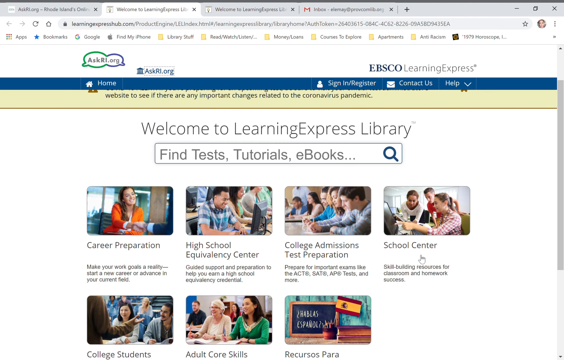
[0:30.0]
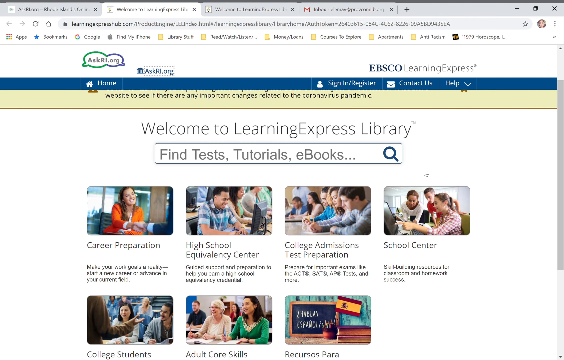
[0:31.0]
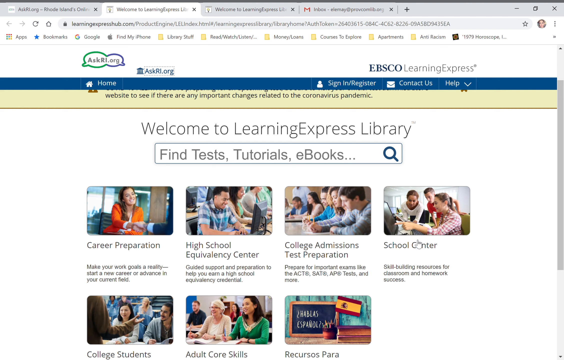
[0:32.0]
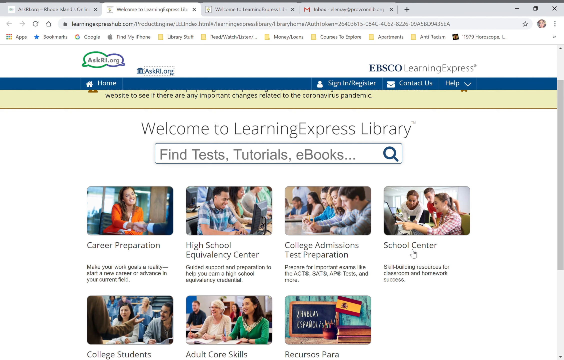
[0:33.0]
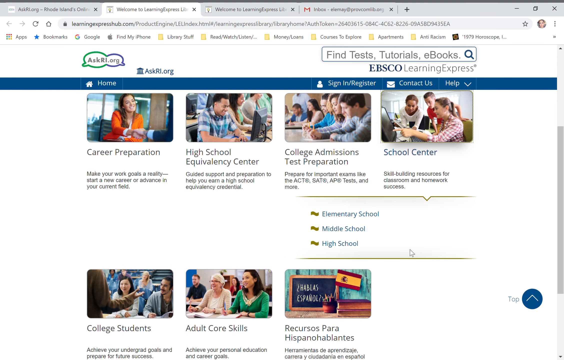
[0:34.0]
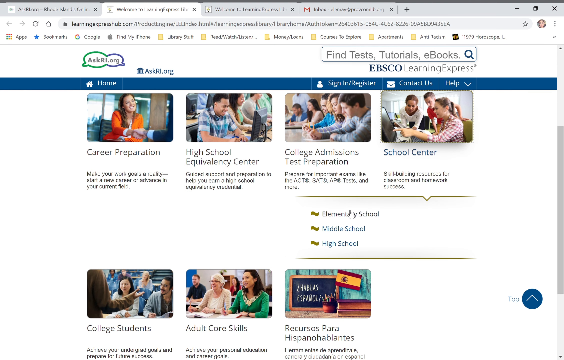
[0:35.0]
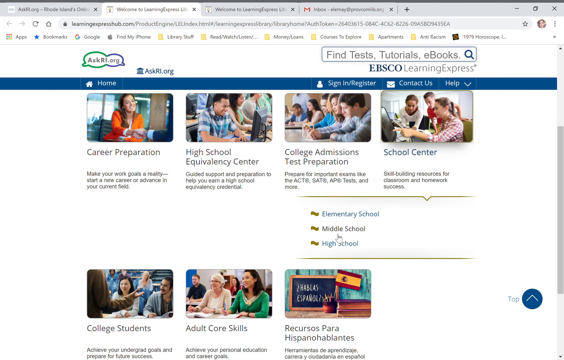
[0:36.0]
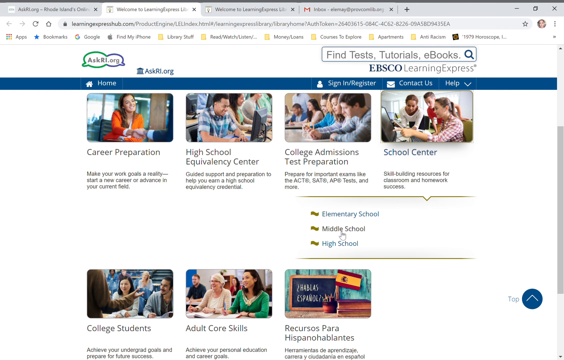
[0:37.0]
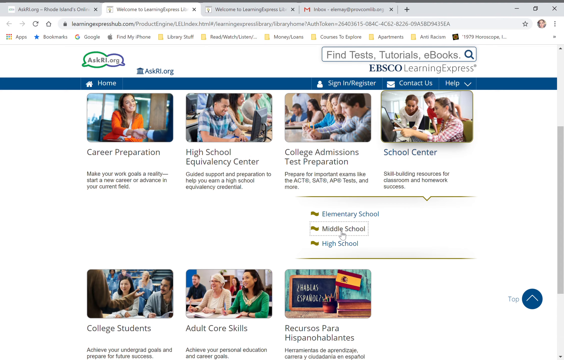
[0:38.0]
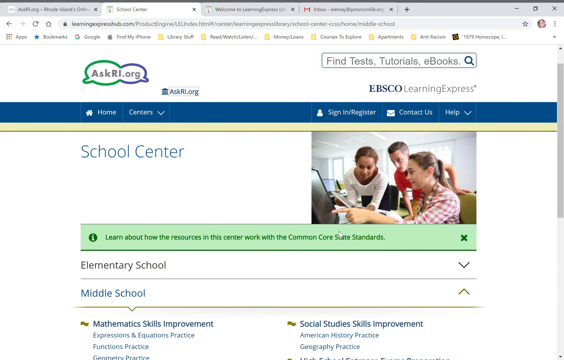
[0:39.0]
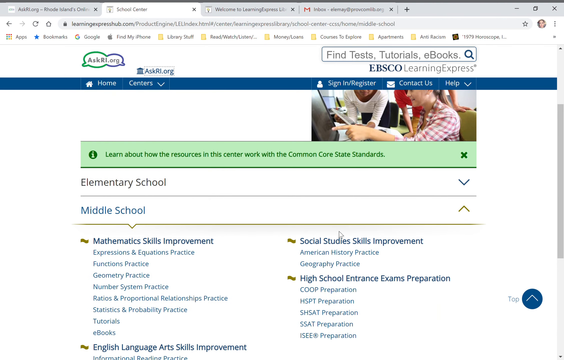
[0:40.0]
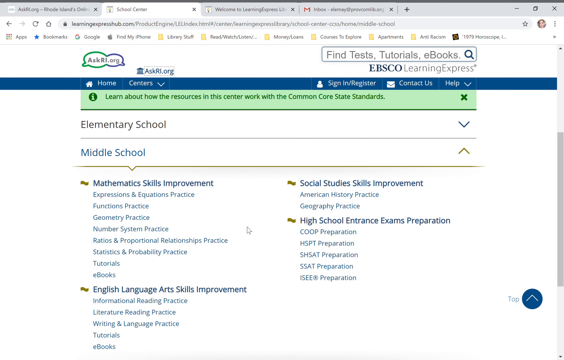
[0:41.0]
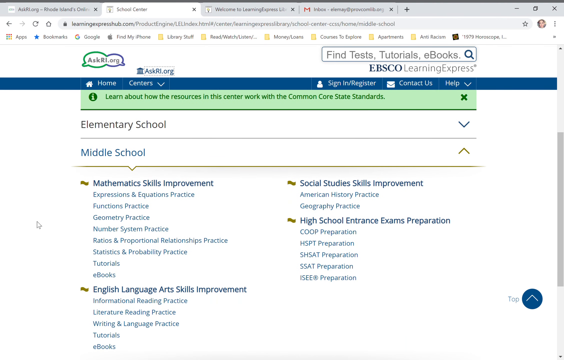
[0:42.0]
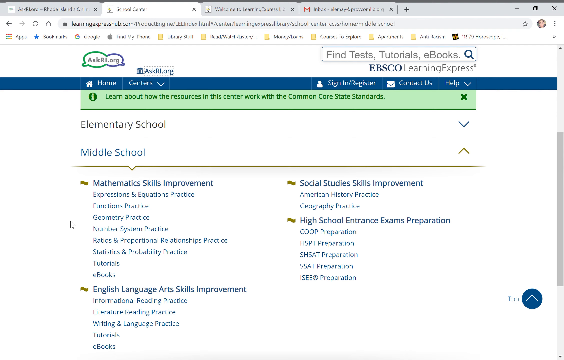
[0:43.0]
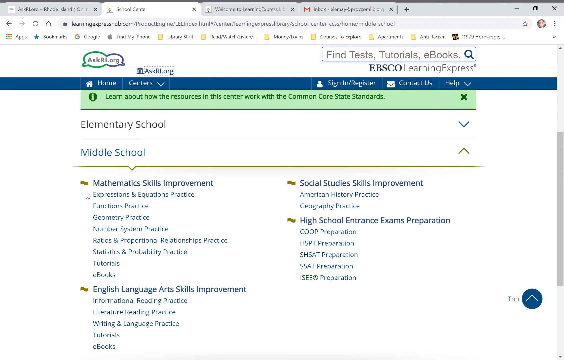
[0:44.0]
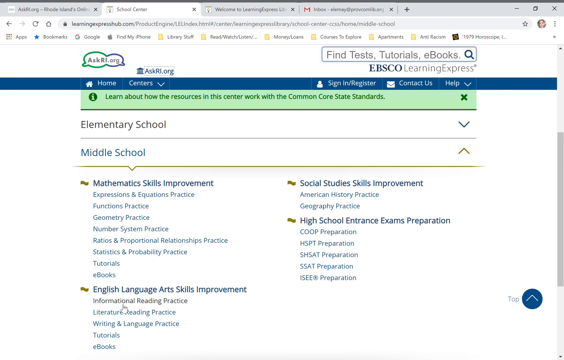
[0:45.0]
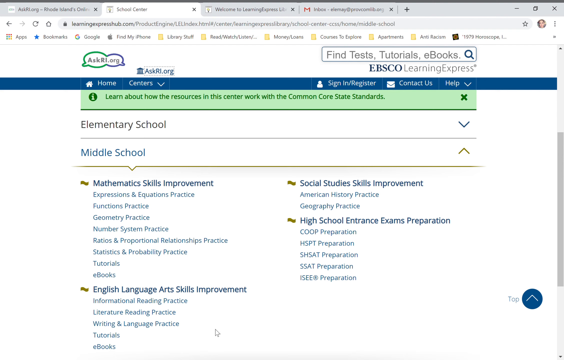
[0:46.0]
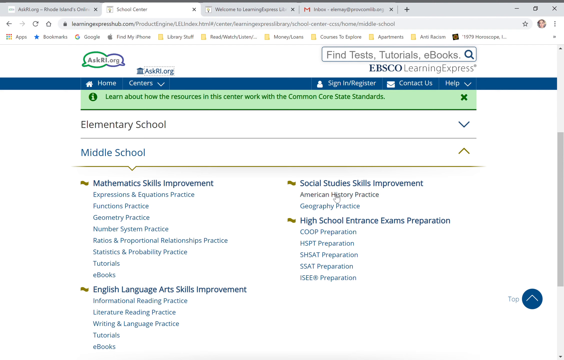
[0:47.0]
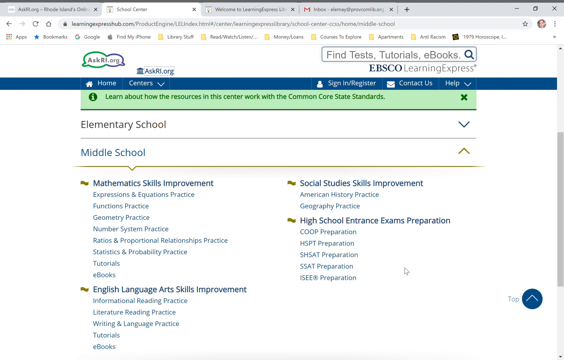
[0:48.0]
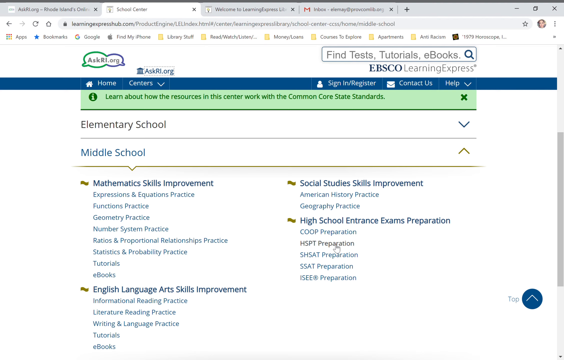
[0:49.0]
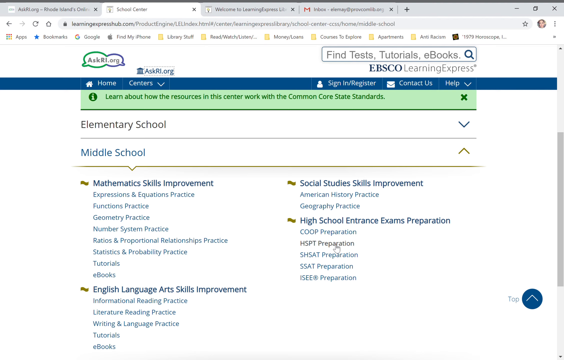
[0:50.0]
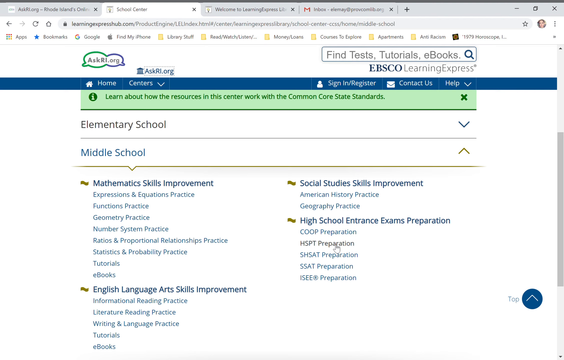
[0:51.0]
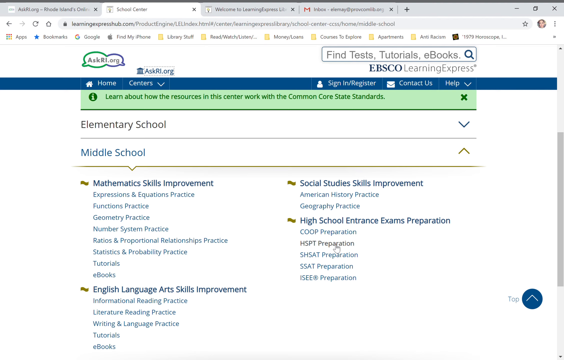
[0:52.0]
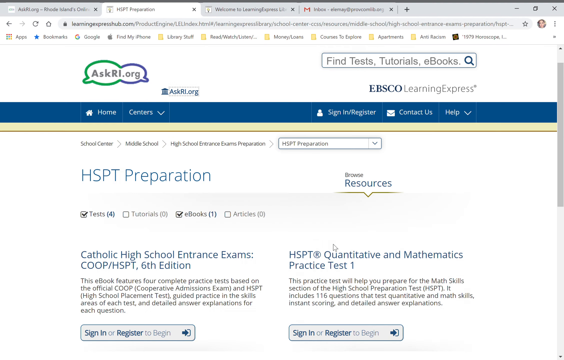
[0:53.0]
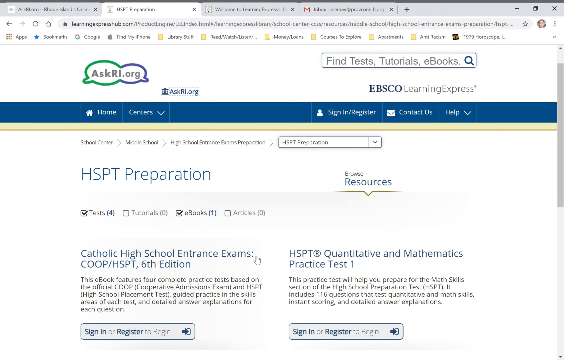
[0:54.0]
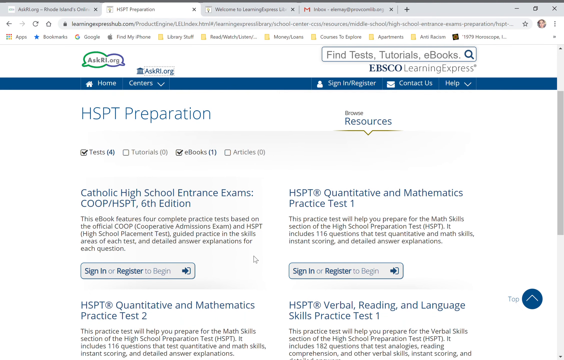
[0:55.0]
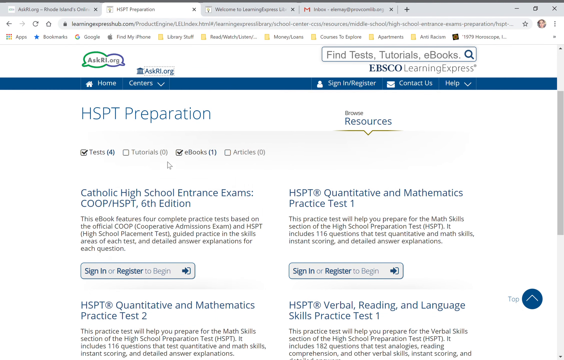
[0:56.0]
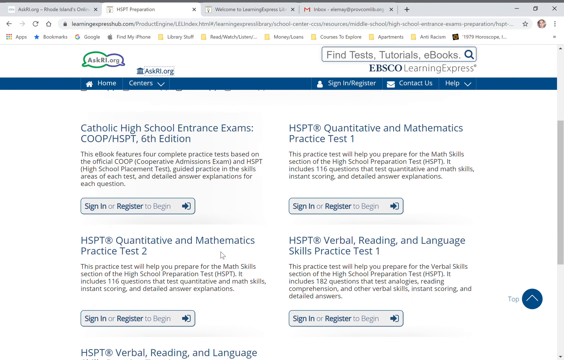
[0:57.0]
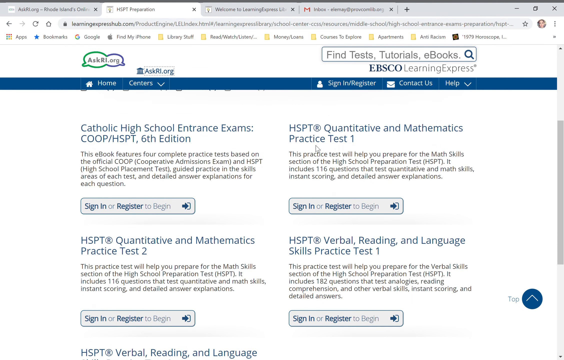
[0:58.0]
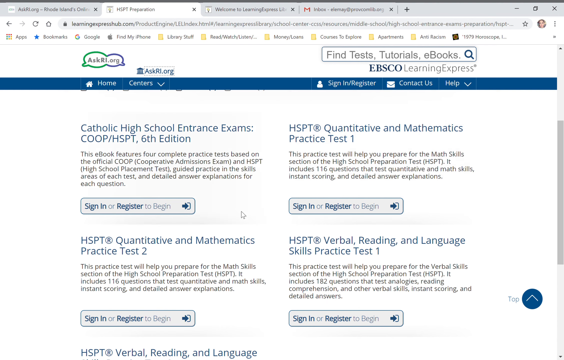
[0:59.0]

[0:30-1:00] The EBSCO Learning Express page shows "welcome to Learning Express Library". The cursor hovers over the school center tab, goes down to the middle school tab, the second one, scrolls down, hovers over the mathematics and skills improvement area, goes down to language arts, then moves to the top right corner to the social studies skills improvement area. It then goes down to the high school entrance exam preparation area and clicks the HSPT preparation link. The HSPT preparation page opens, listing different practice tests. The cursor hovers over a couple of them and moves around the page without clicking anything, making a couple of circles in the middle of the screen.